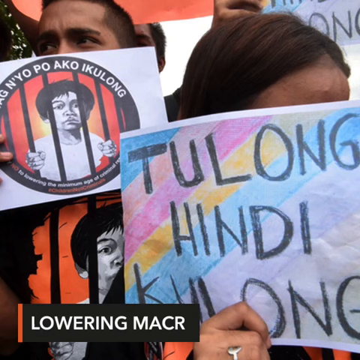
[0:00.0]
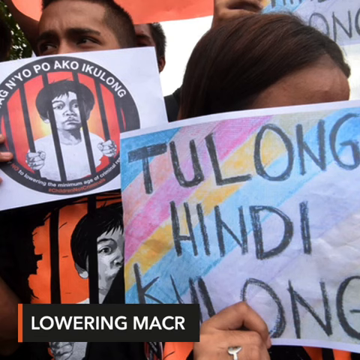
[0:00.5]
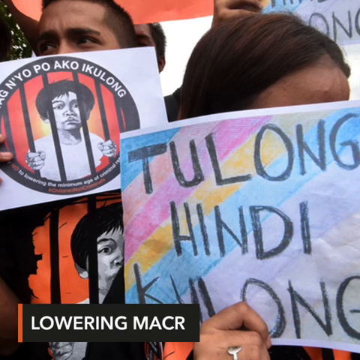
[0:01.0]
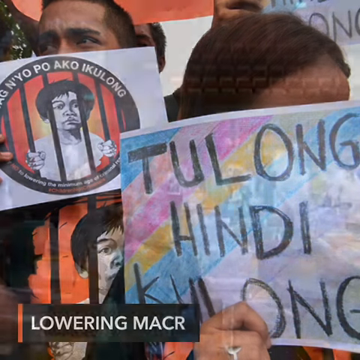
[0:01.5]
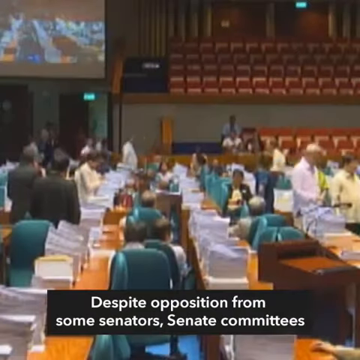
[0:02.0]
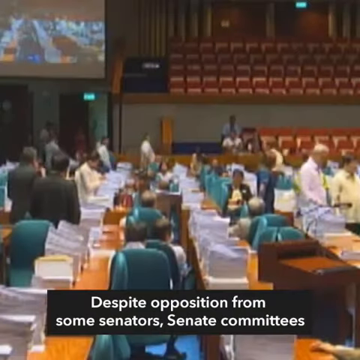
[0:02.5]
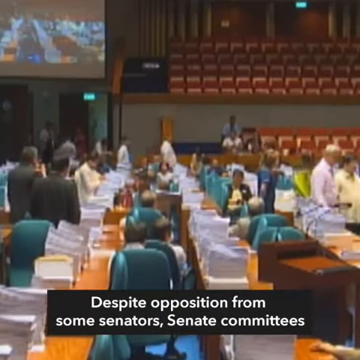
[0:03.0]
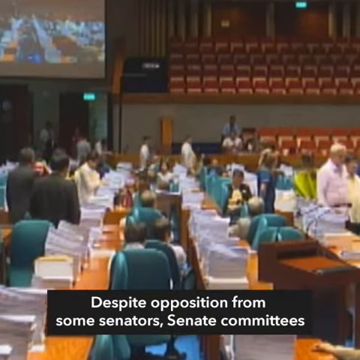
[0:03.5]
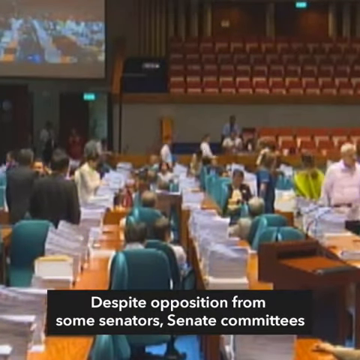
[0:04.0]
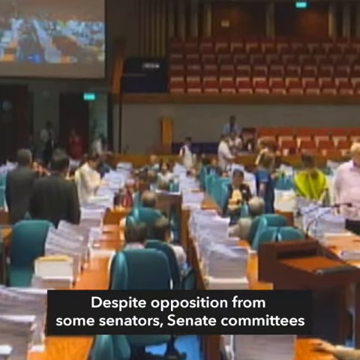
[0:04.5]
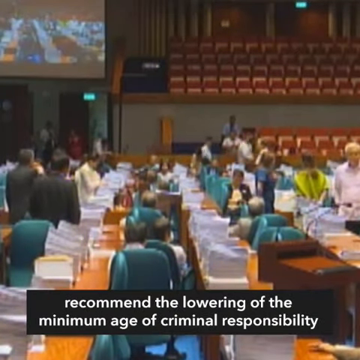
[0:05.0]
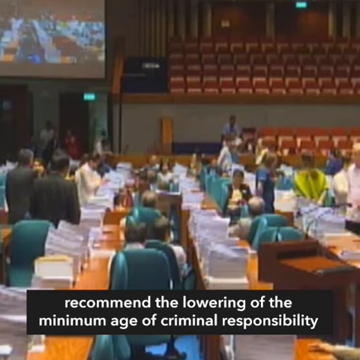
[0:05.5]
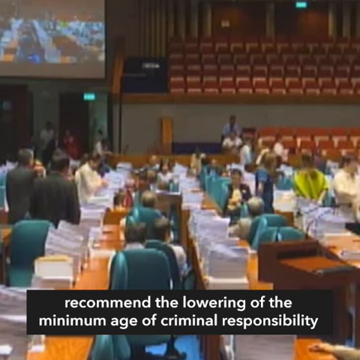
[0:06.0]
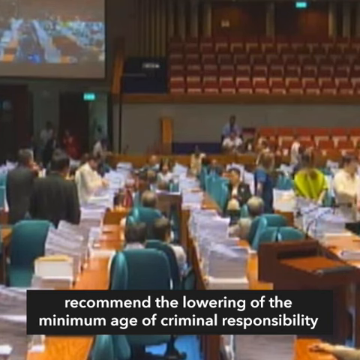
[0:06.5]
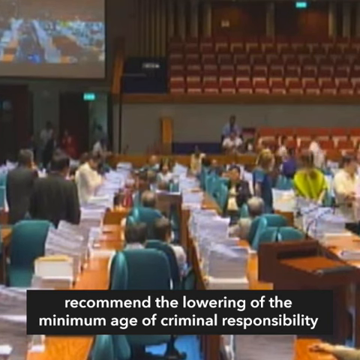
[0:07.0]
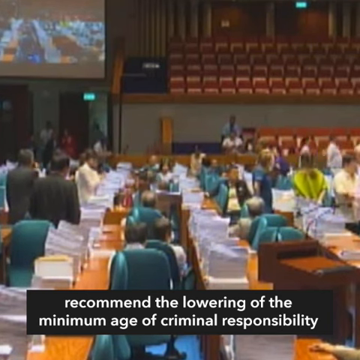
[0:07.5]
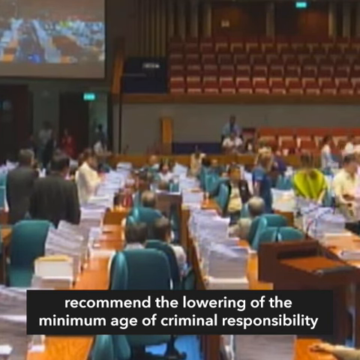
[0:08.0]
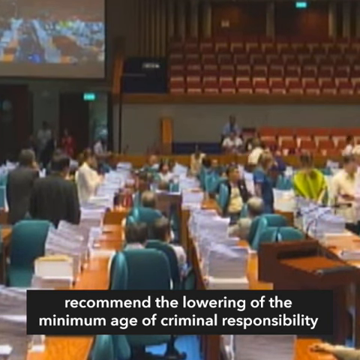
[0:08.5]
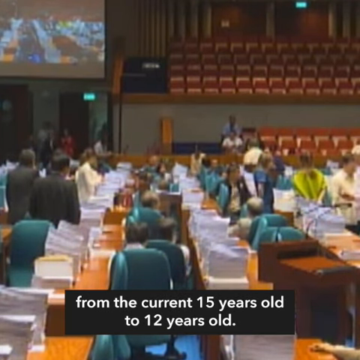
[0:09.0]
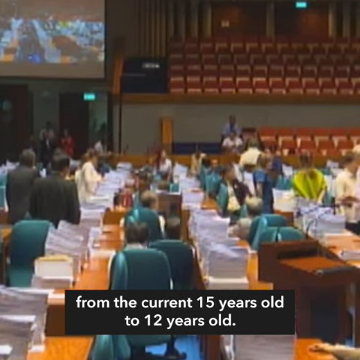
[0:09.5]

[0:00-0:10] The video opens on a picture of people who look like they are in some sort of protest, with the words "Lowering MACR" at the bottom on a black bar that has an orange left side. A woman and a man in a crowd hold up signs in front of their faces. The scene switches to the inside of some sort of theater with a bunch of seats and desks, with papers all over them throughout the bottom floor. A projector is in the top left corner, and people walk around through the long desks that take up the entire floor. The desks also appear to have folders with papers on them. Some text at the bottom of the screen shows information.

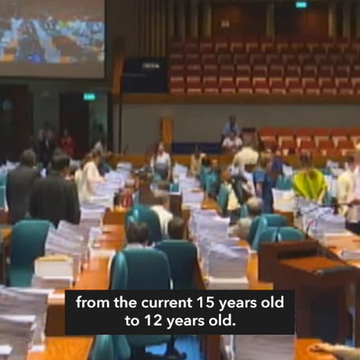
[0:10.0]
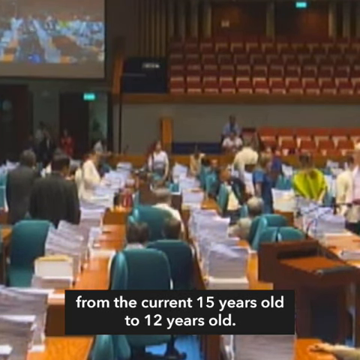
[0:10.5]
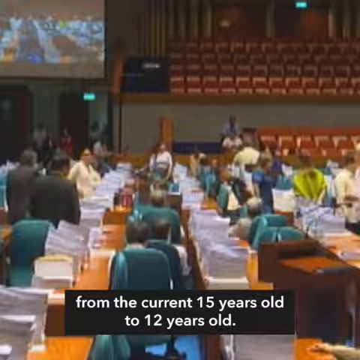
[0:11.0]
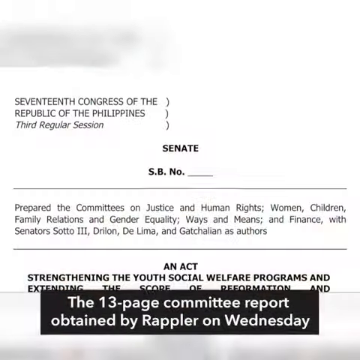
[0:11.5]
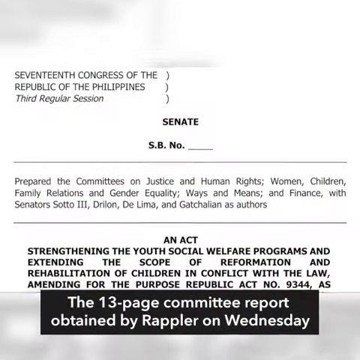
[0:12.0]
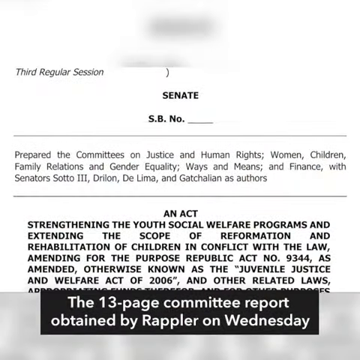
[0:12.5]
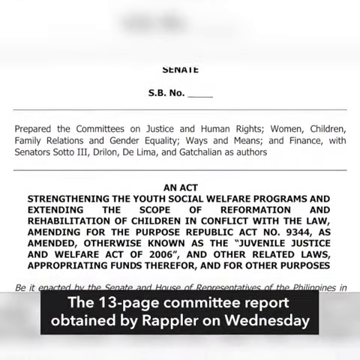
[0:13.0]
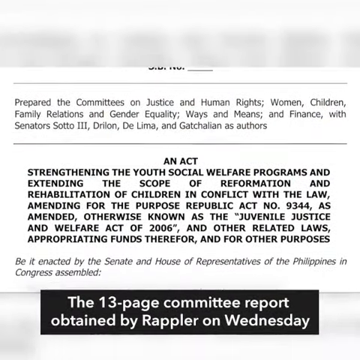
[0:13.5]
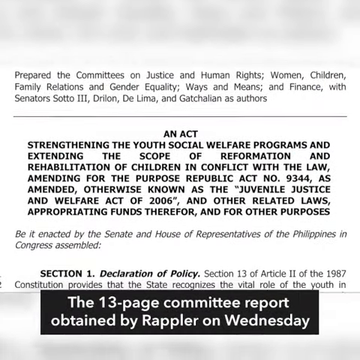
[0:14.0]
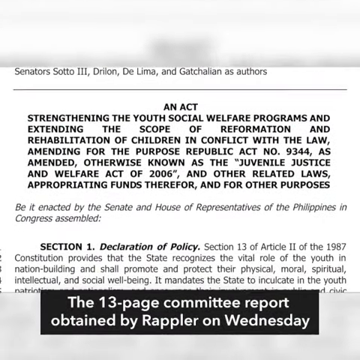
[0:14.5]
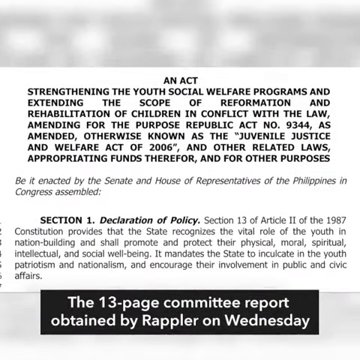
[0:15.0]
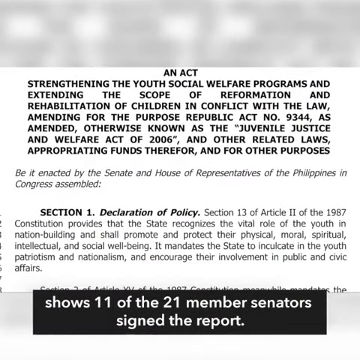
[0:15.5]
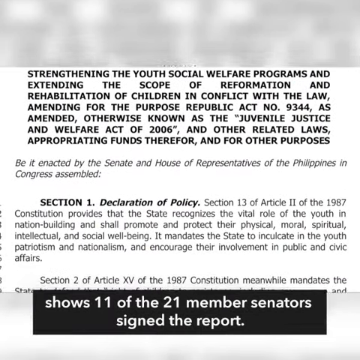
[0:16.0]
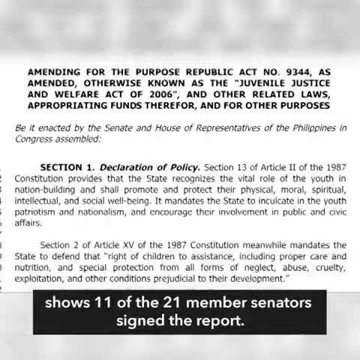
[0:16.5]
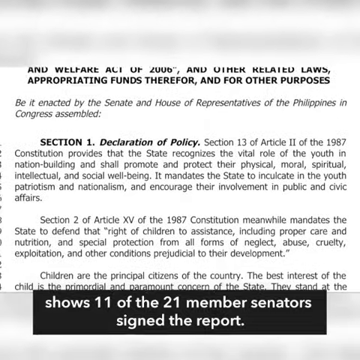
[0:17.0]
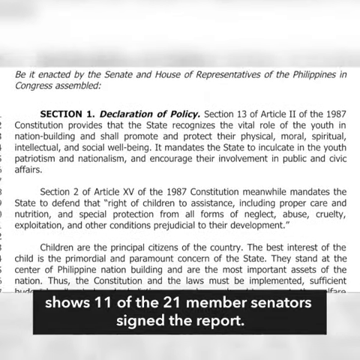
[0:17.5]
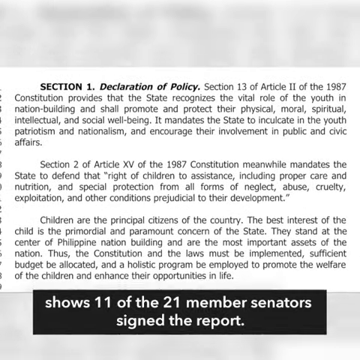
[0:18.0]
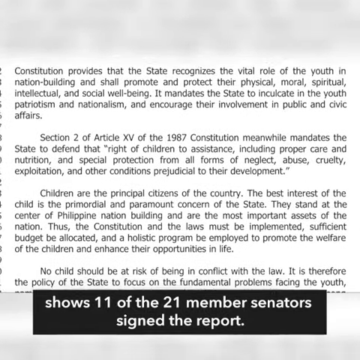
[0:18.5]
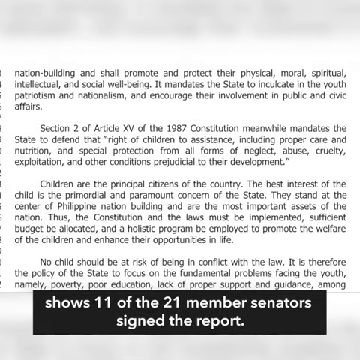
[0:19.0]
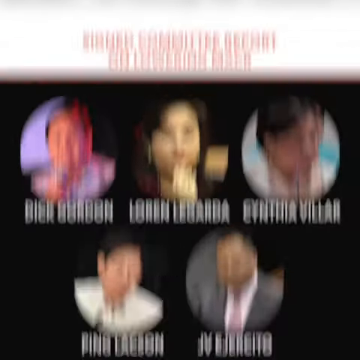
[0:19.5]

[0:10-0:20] The shot of the theater continues with a lot of movement, as many people looking very professional walk around their desks. It switches to an image of some sort of Senate bill or report, showing part of the report on the page. The page scrolls down slowly, showing section one of the report and more information below as it continues to scroll. There is also text at the bottom of the screen, and the top and bottom bars of the screen are a bit blurry, with the paper in the center. The screen then switches to another graphic reading "signed committee report on lowering MACR," showing five people with their names on a black background.